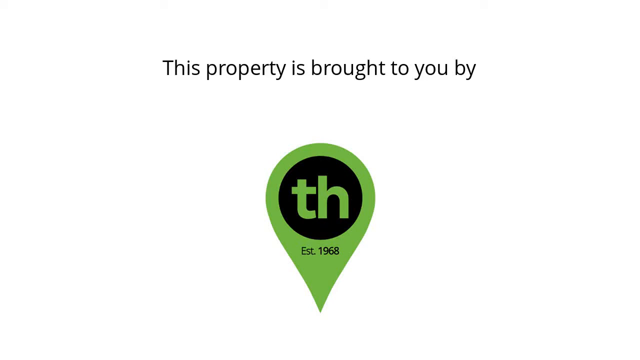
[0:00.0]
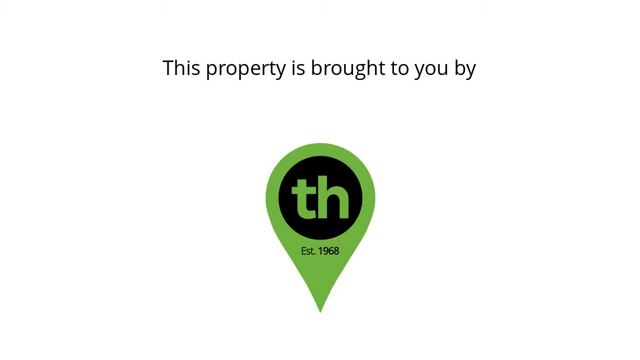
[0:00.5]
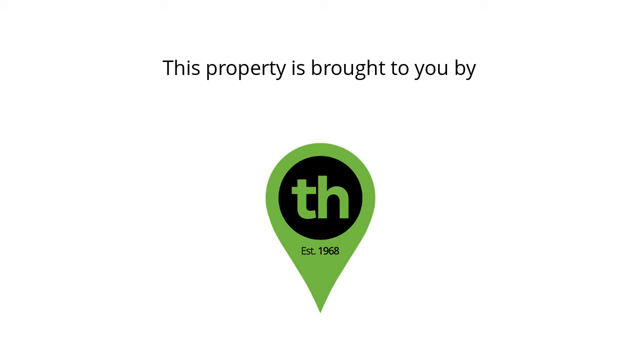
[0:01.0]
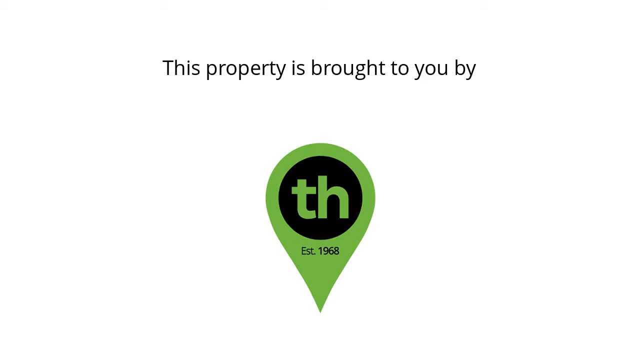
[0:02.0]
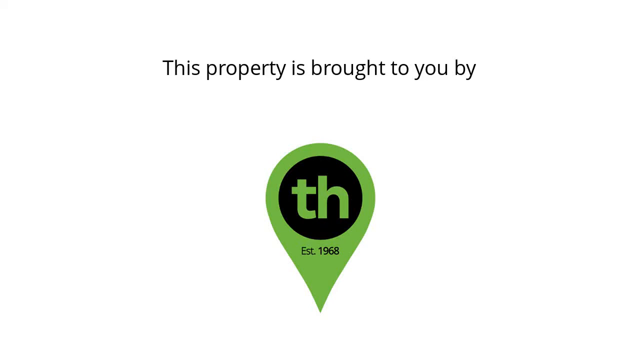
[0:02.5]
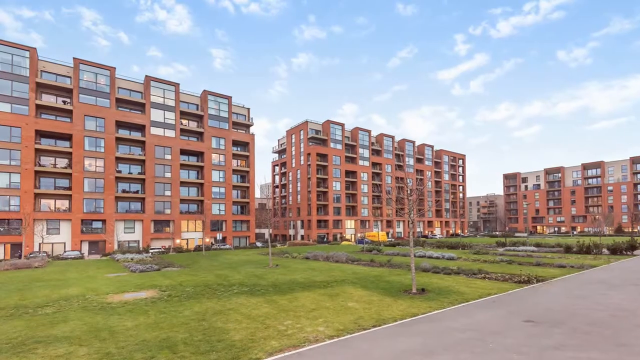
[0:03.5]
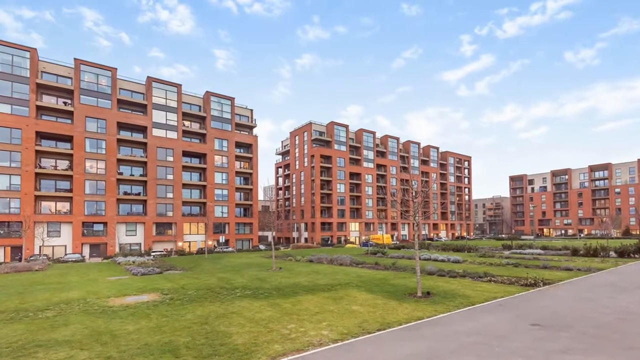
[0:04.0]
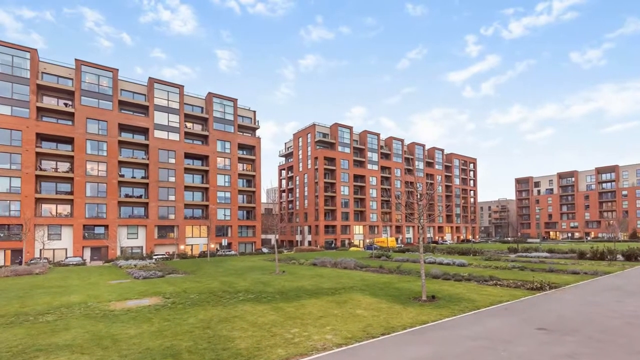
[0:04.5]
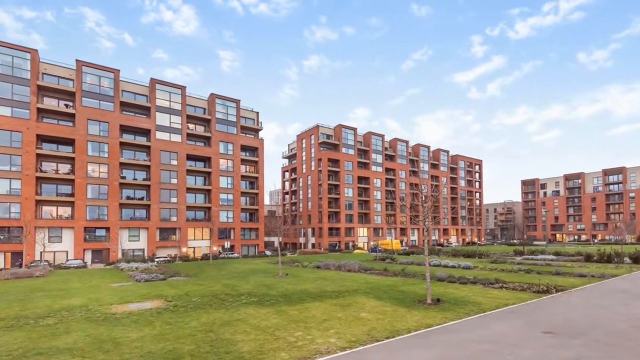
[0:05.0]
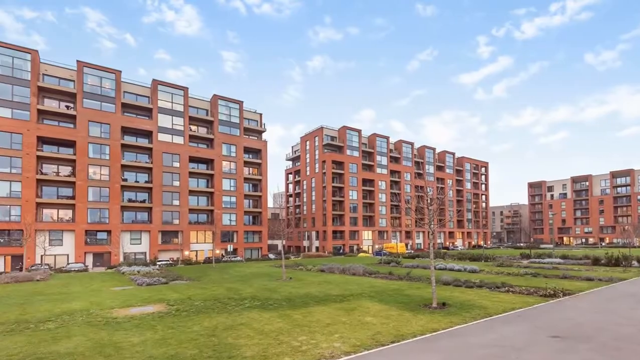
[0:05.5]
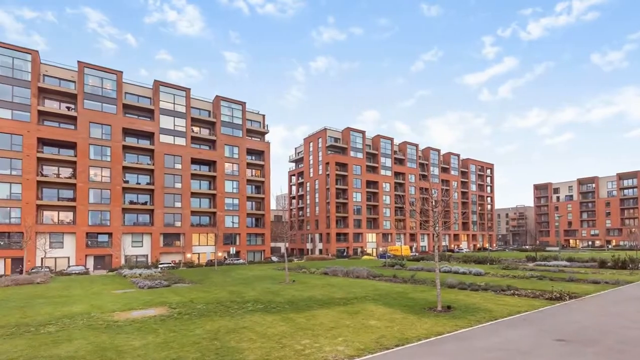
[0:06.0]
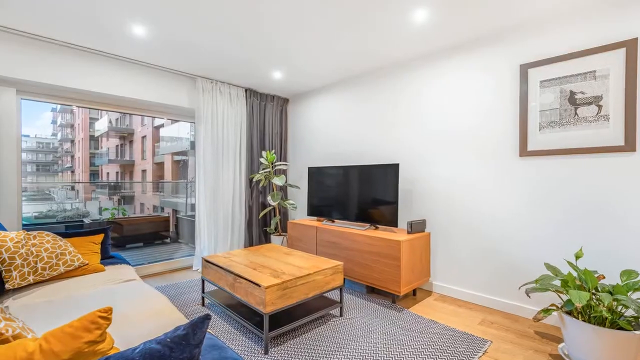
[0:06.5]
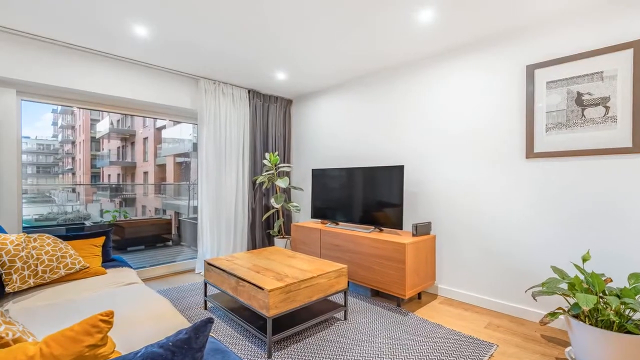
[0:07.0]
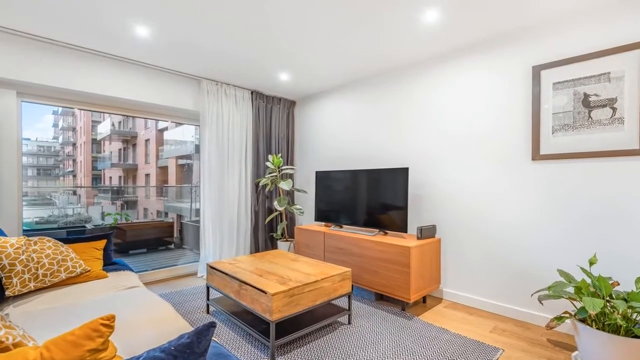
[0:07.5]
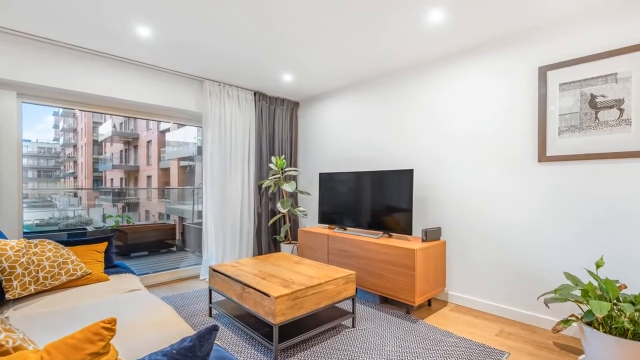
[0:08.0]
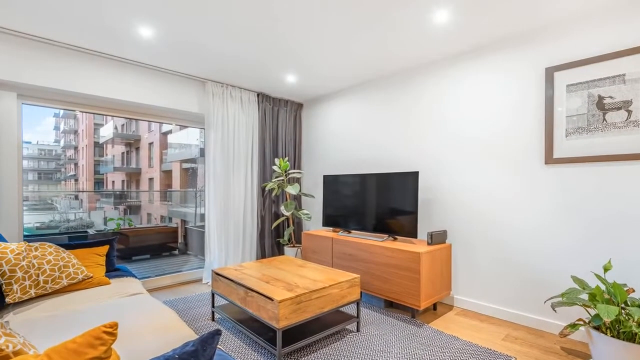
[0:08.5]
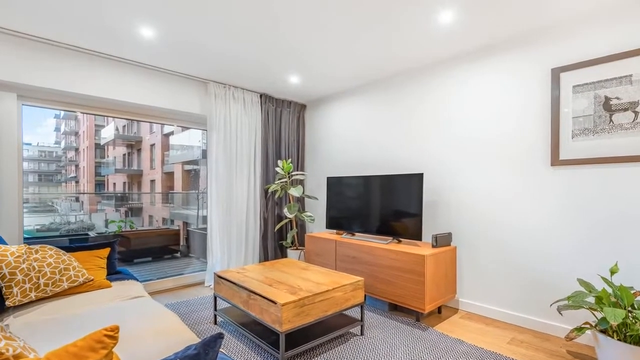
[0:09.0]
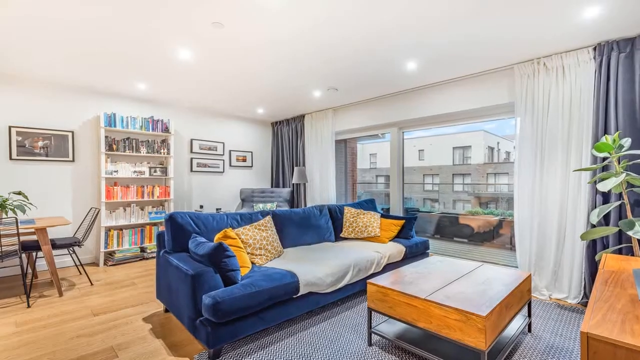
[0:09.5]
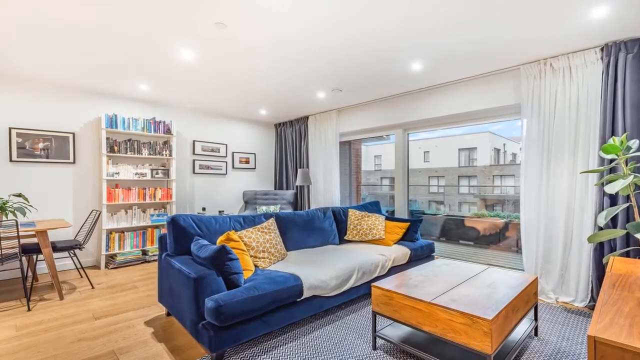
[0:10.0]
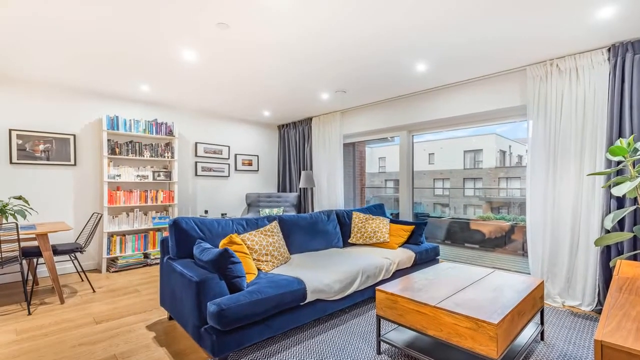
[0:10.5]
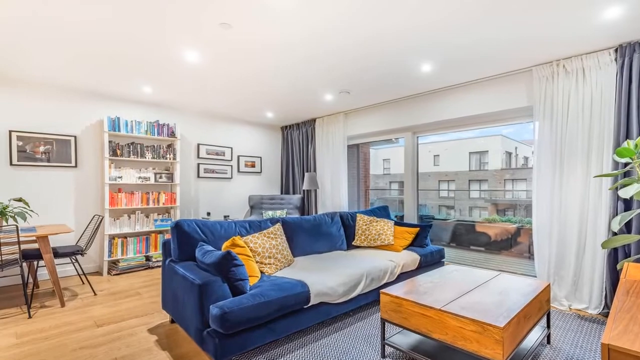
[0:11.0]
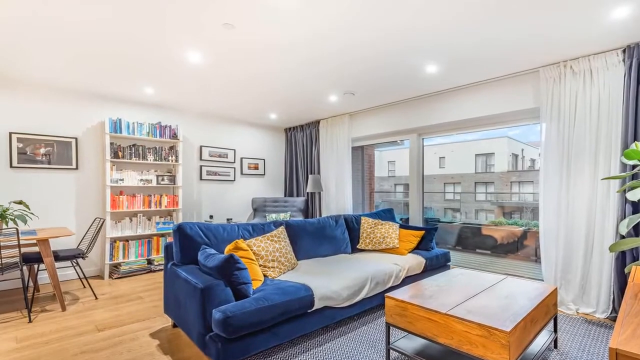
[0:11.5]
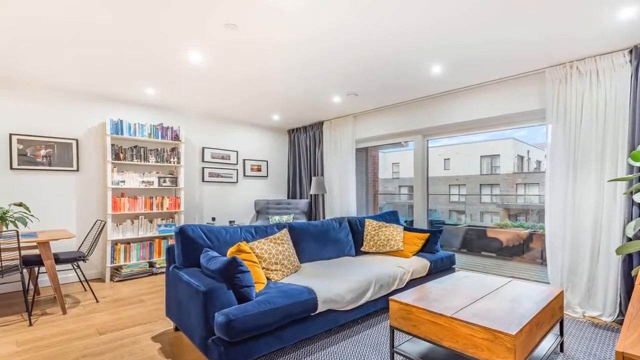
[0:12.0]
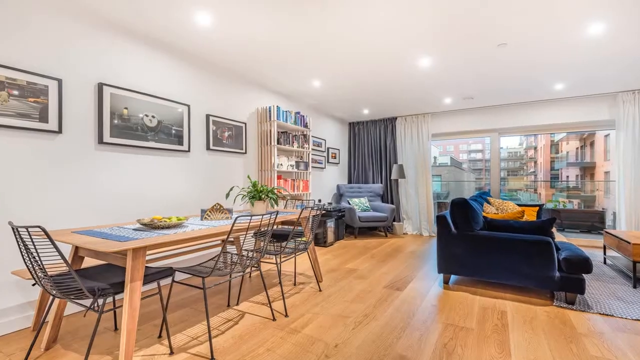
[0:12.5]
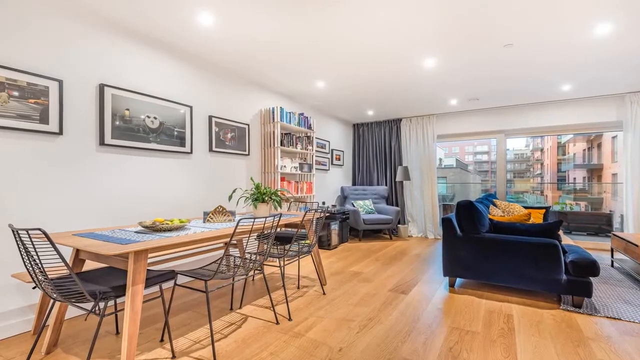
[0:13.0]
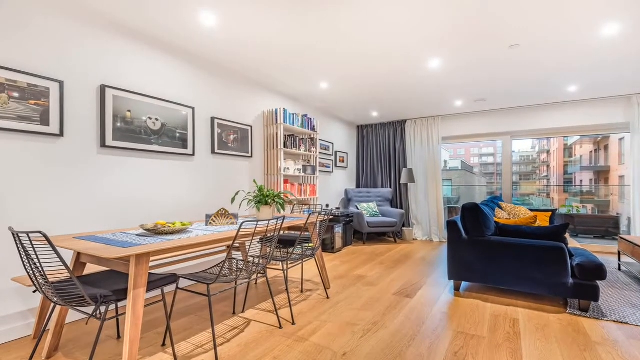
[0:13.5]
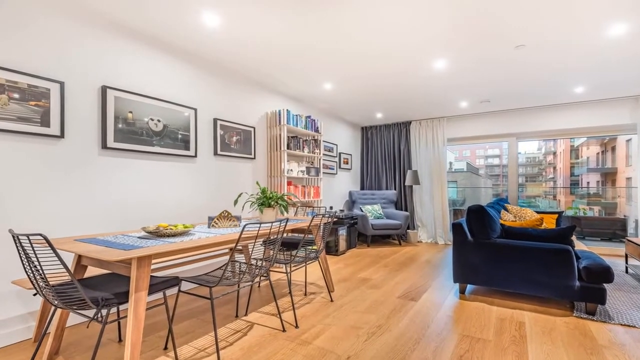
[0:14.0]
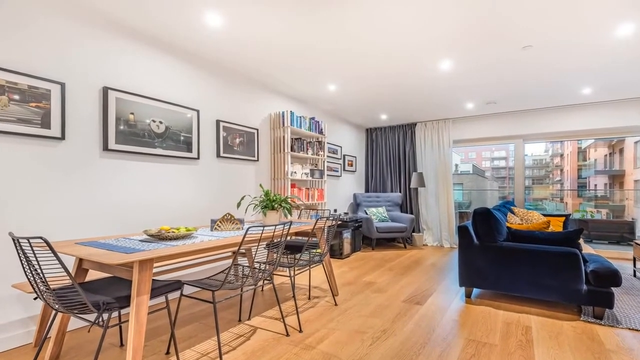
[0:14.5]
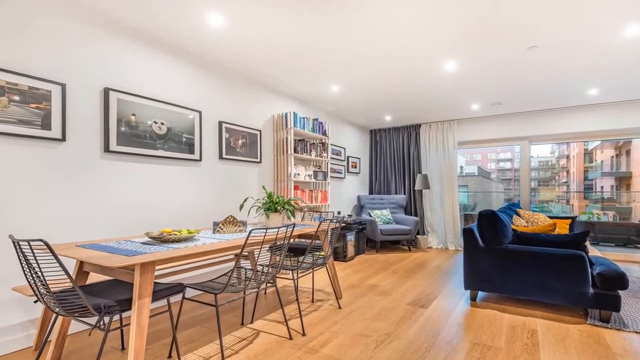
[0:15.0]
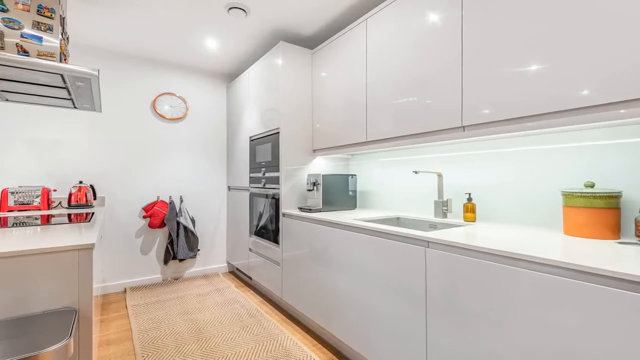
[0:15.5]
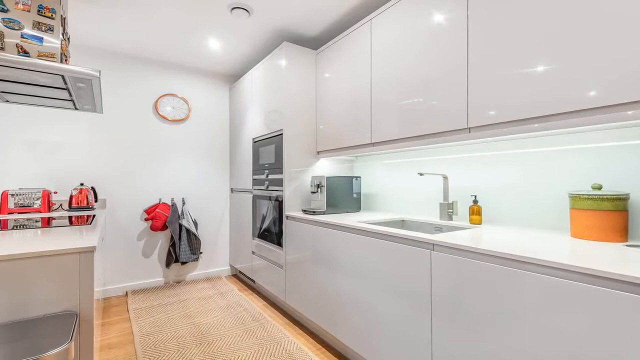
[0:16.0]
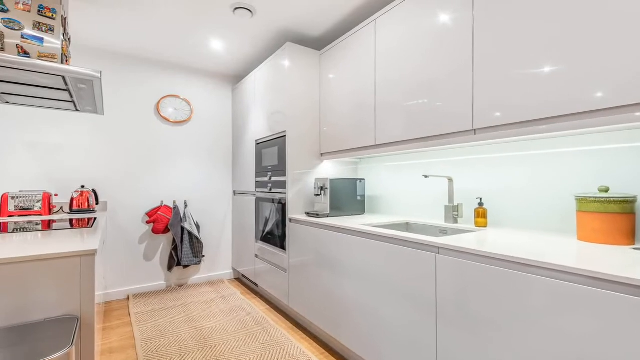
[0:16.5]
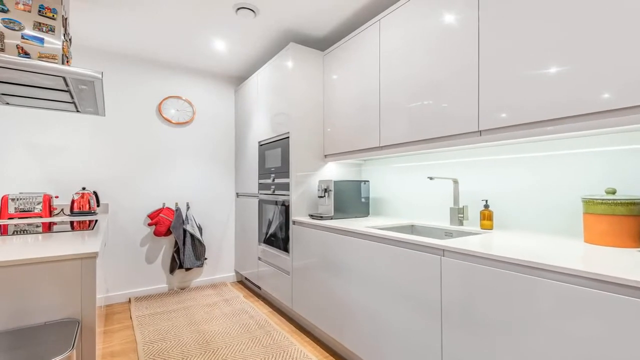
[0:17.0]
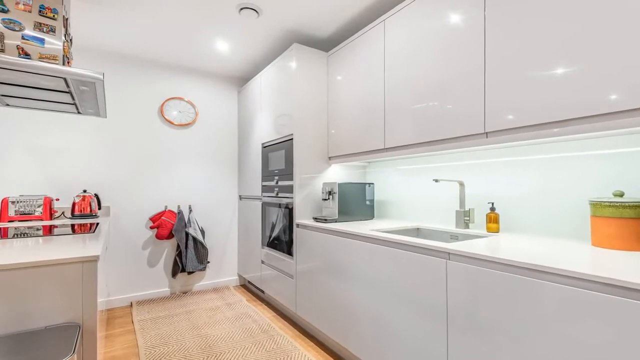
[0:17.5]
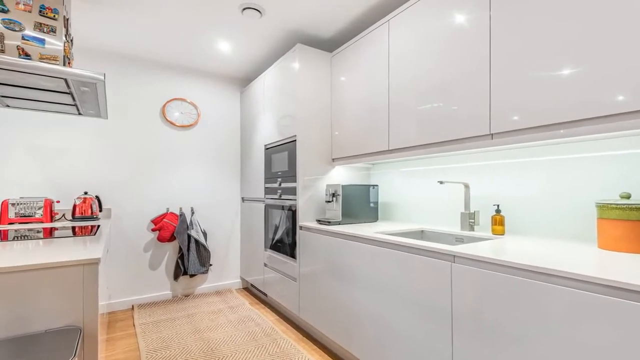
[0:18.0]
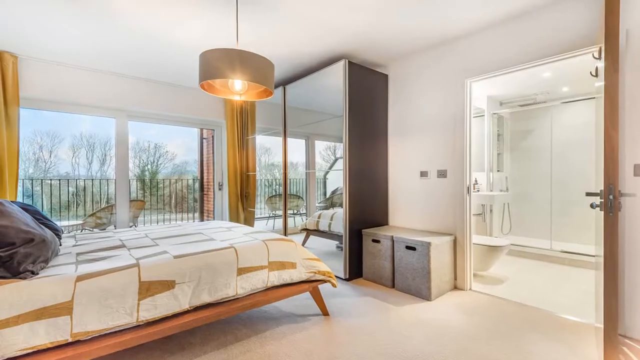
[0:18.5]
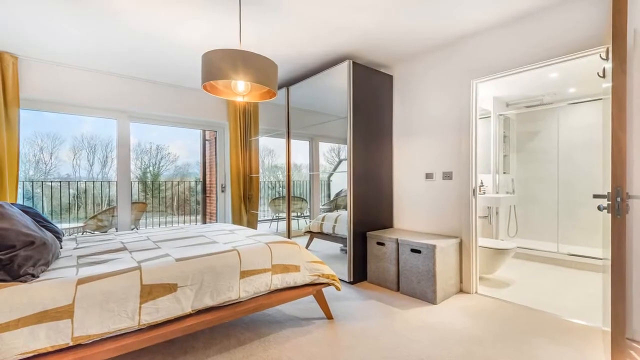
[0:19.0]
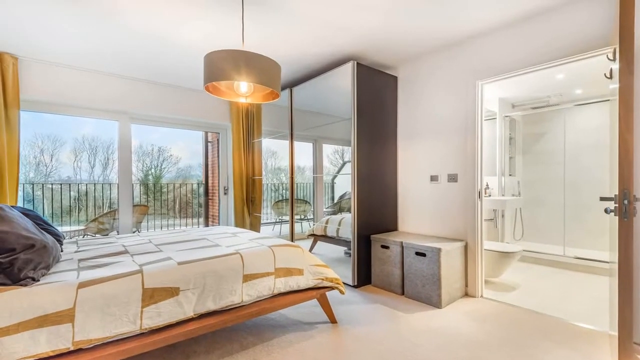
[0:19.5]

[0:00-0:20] A green and black logo appears on the screen by itself. It looks like an upside-down green teardrop with the lowercase letters t and h in the middle and "established 1968" underneath. The video then switches to a shot of an apartment complex that is mainly brick with lots of windows. There are three main buildings, with even more visible in the background. There is some grass in front, some apparently very small trees without leaves, and a few cars parked in front of the buildings. Next comes a living room, with curtains open on what are perhaps open sliding glass doors leading out onto a balcony that has glass. Another angle of a living room shows a blue couch, followed by a dining area with pictures on the wall, a very white kitchen, and a bedroom.